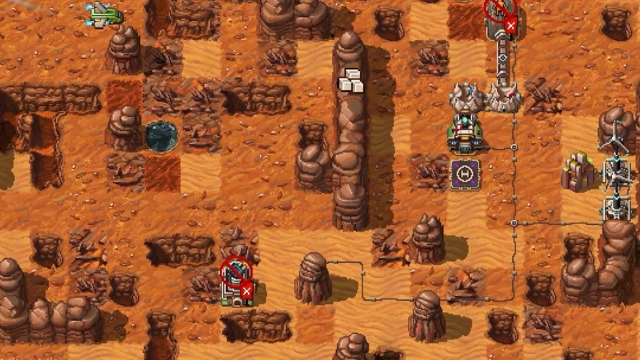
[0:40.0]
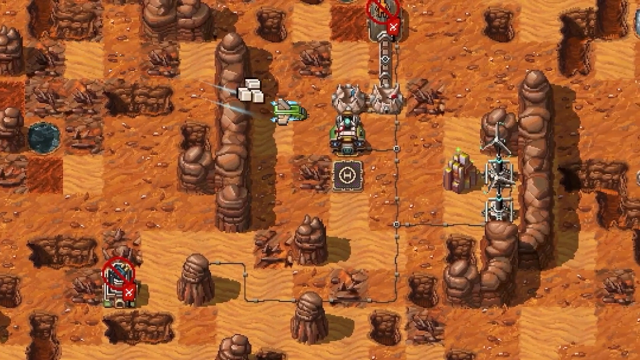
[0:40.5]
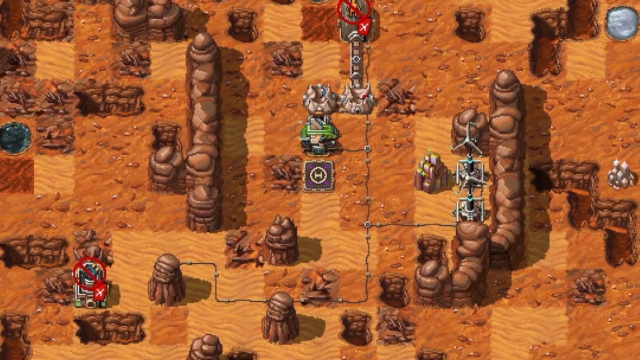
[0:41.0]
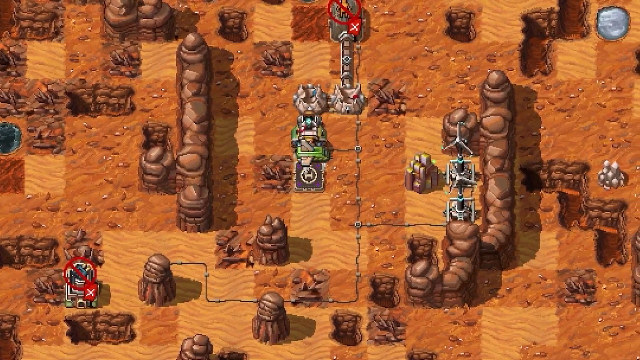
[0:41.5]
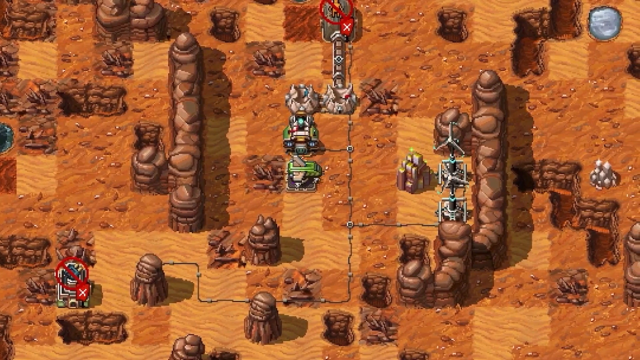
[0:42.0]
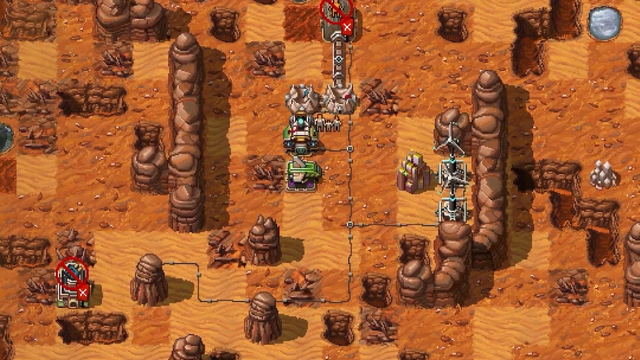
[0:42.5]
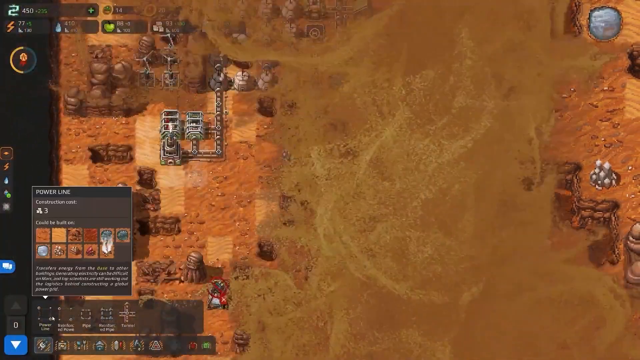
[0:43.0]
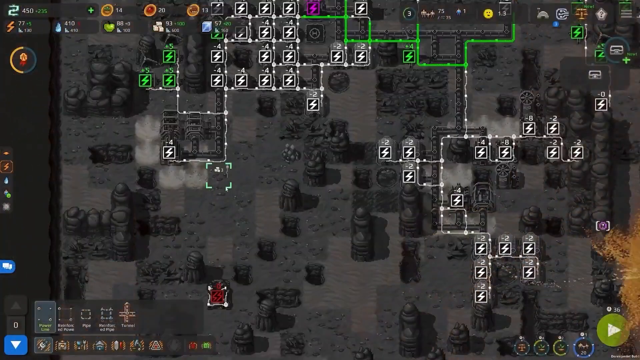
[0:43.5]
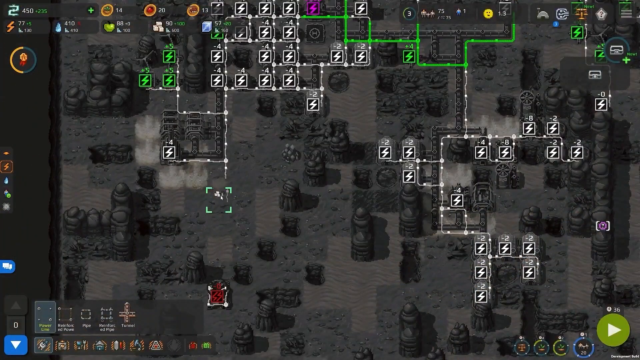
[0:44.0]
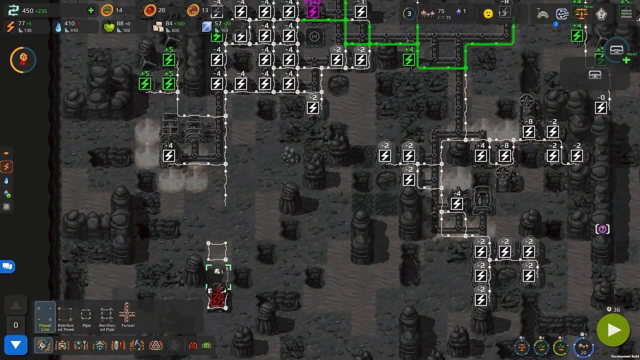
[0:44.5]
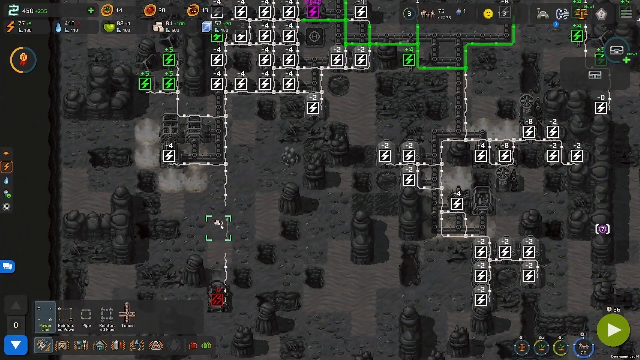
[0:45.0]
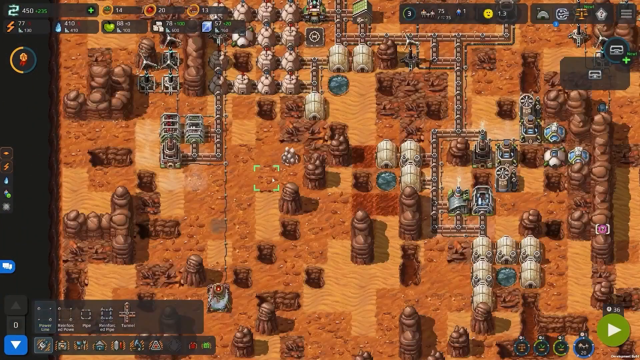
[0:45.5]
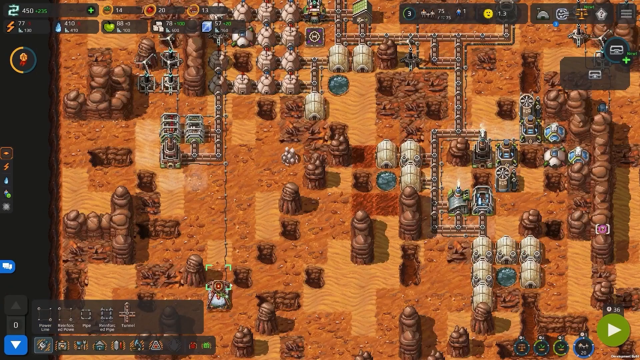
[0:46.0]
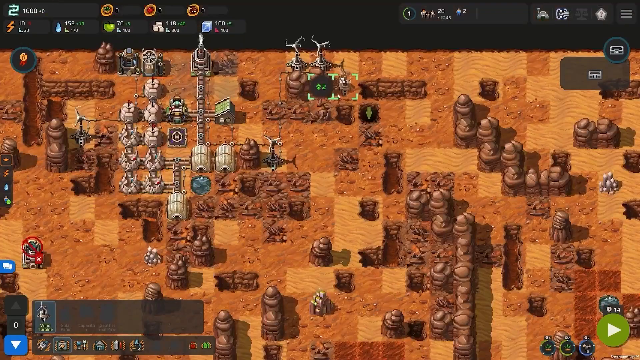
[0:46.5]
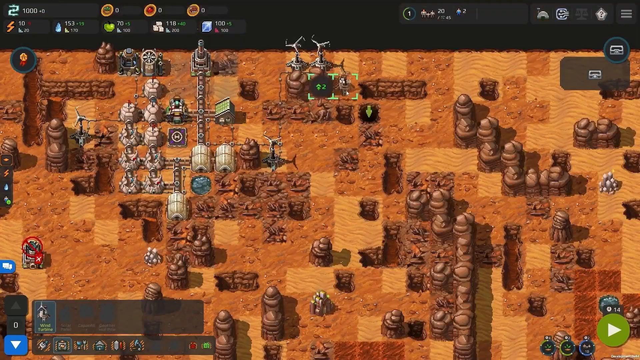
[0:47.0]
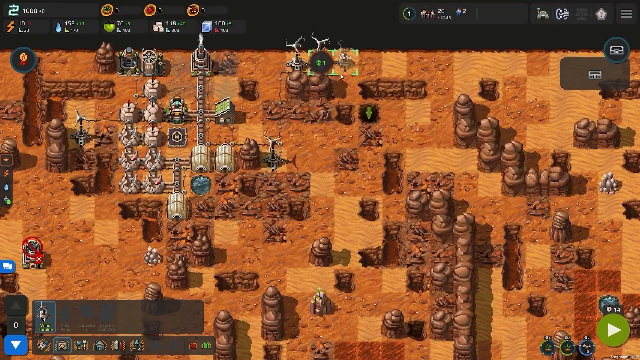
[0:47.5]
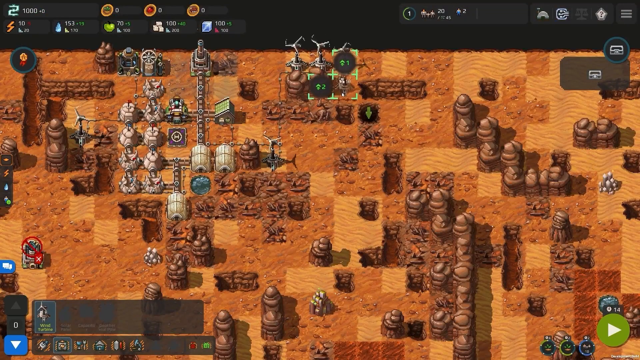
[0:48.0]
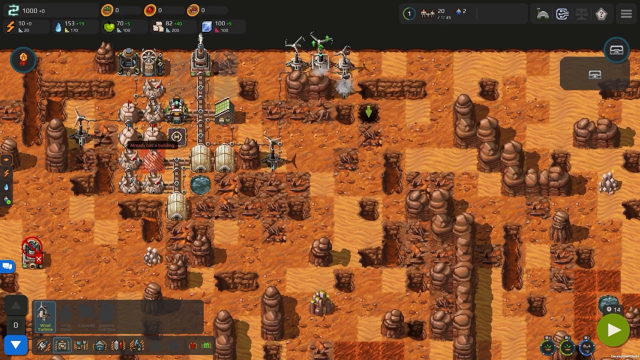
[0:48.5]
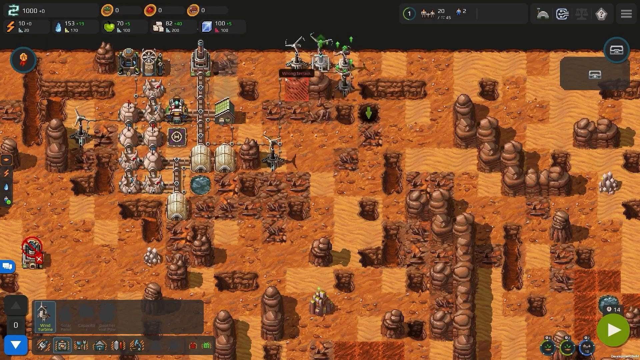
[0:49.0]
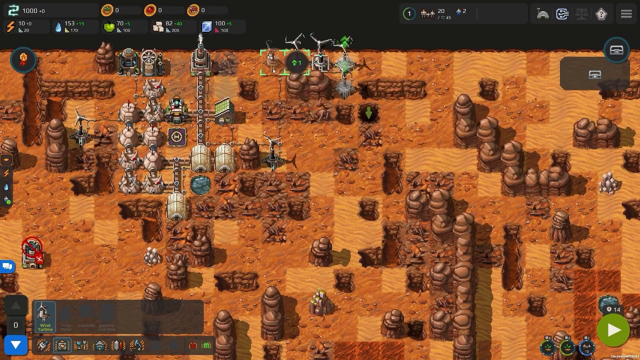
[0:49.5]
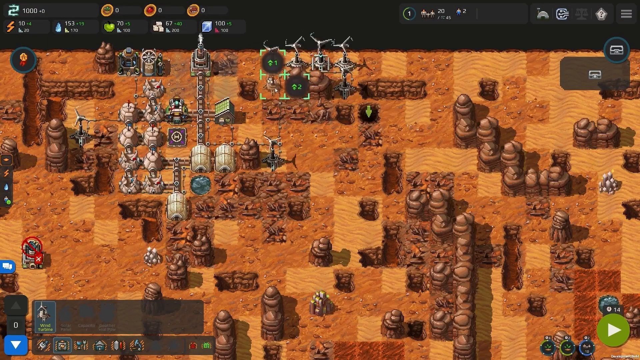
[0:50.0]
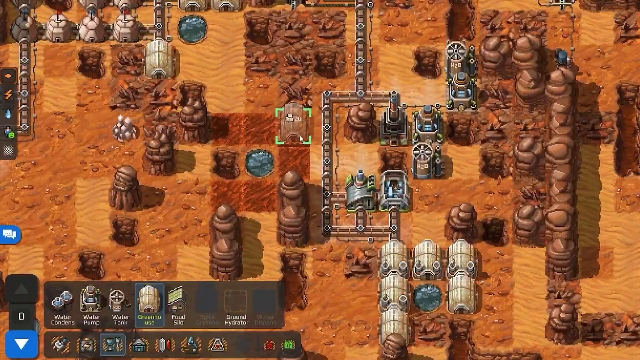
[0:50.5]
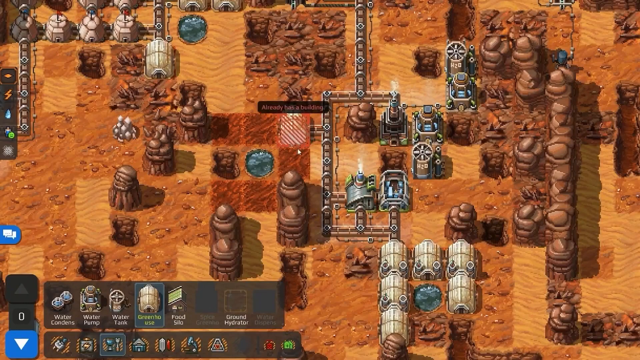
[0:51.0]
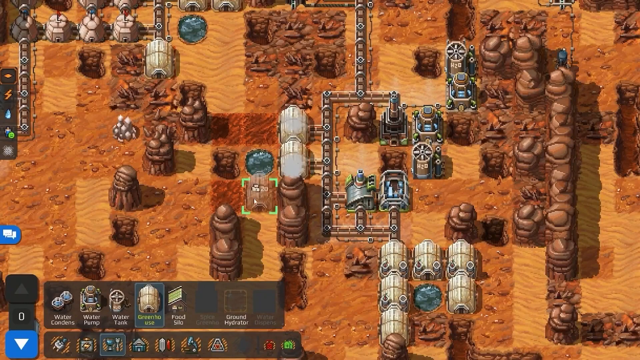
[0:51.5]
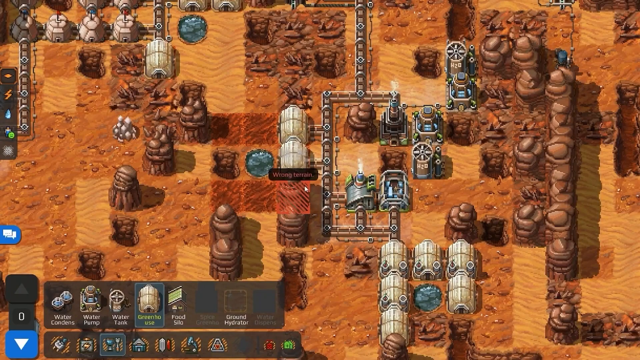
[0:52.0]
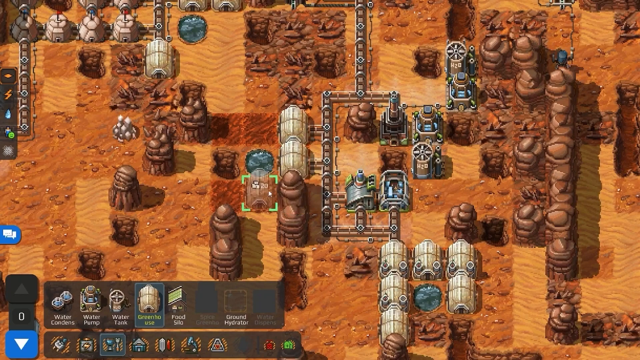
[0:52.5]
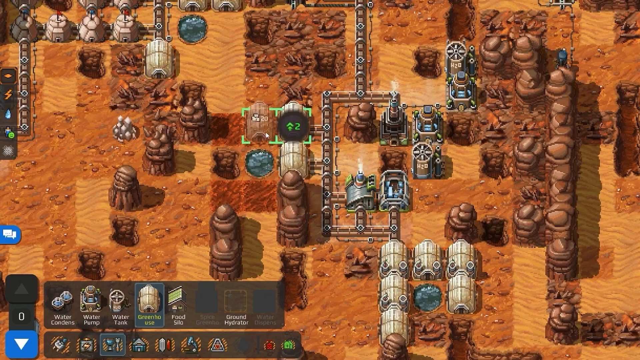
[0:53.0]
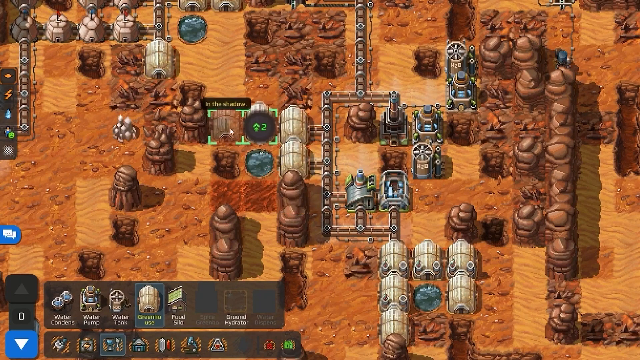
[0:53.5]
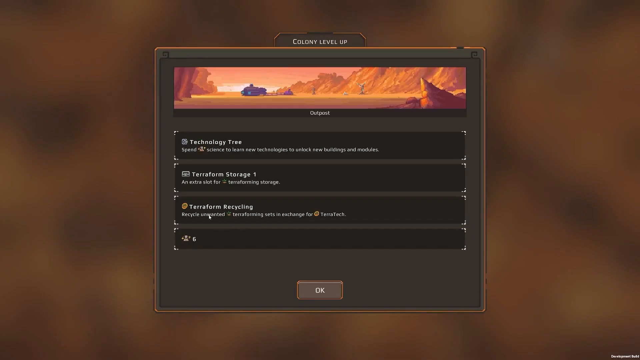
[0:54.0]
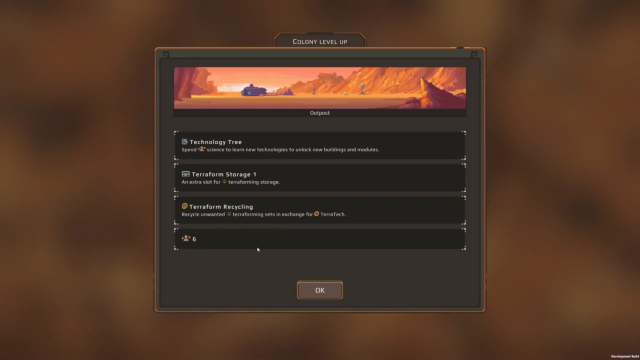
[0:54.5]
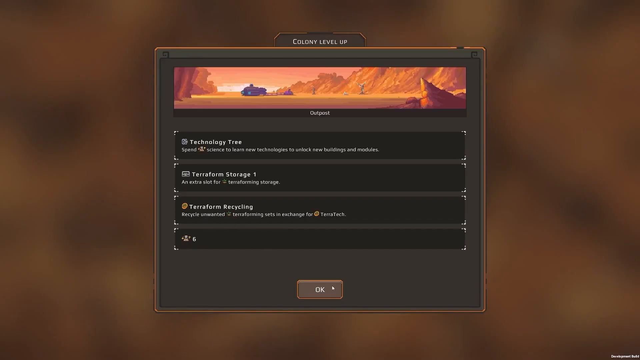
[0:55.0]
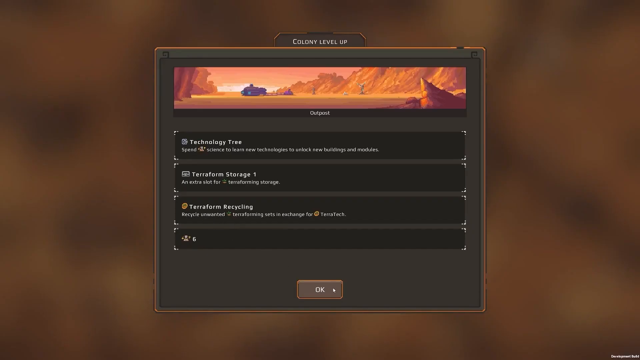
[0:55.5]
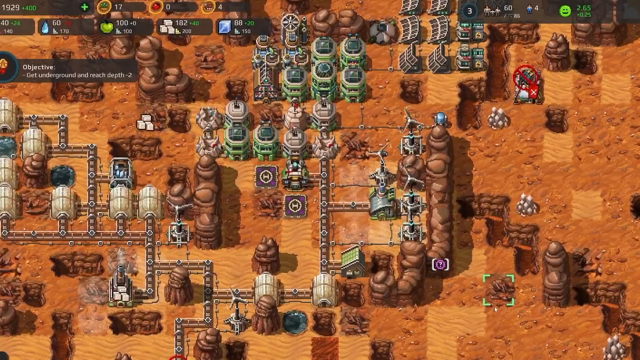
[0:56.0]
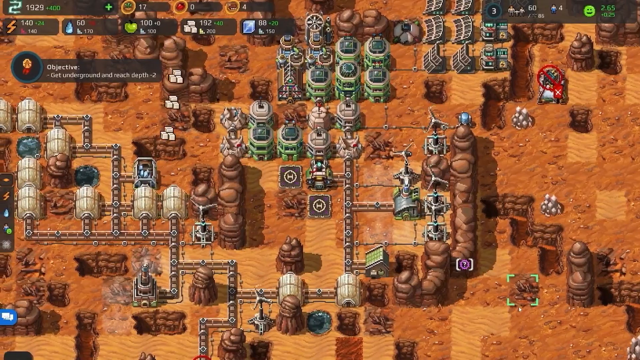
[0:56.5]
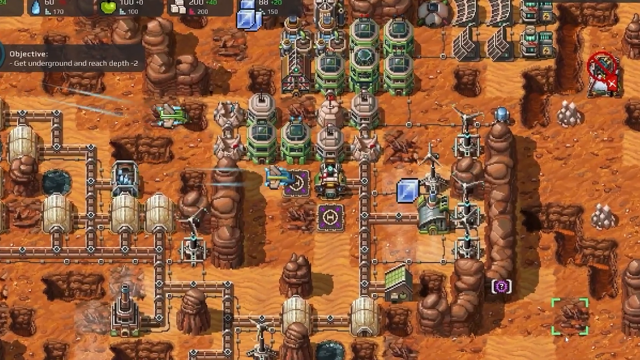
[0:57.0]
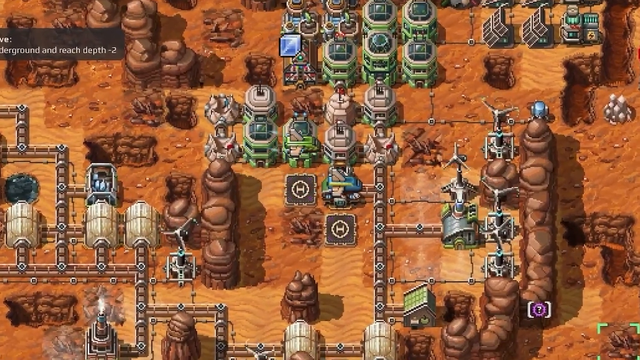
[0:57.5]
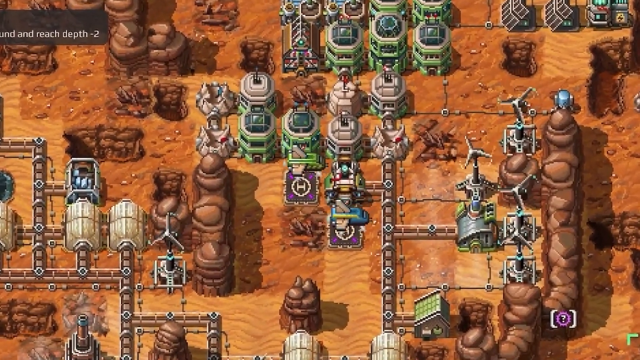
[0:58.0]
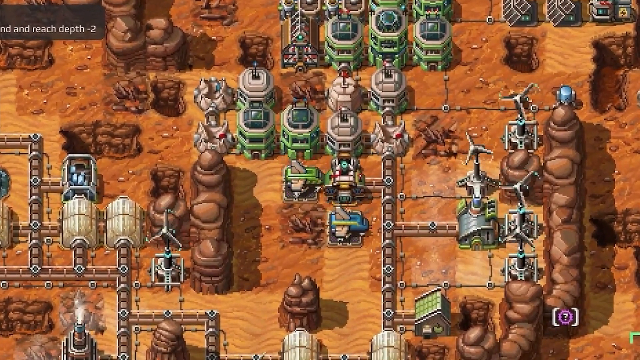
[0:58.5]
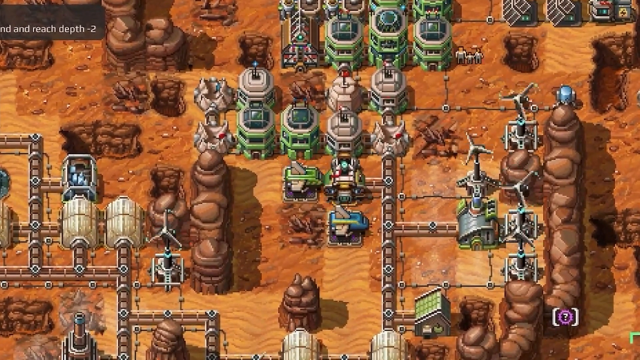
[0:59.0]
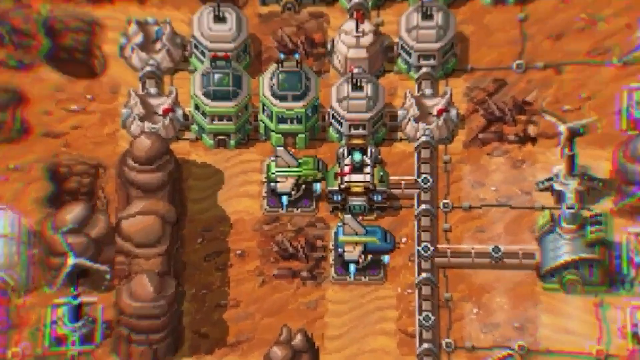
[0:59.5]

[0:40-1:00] Something like a plane comes and lands on one of the helicopter pads. The player goes into a menu for connecting the power grid to different parts of the map, showing the power generators and how much power is generated versus how much each thing uses. Some green ones have a plus five, while white ones have a minus four or a minus two; one has a minus eight, and a couple show minus zero. The player keeps placing more buildings, which show plus one with the credit symbol. Another option pops up allowing them to upgrade a building, and the player moves through everything very rapidly. Toward the end, a menu appears that says "colony level up", with options for the technology tree, terraform storage, terraform recycling, and apparently population.